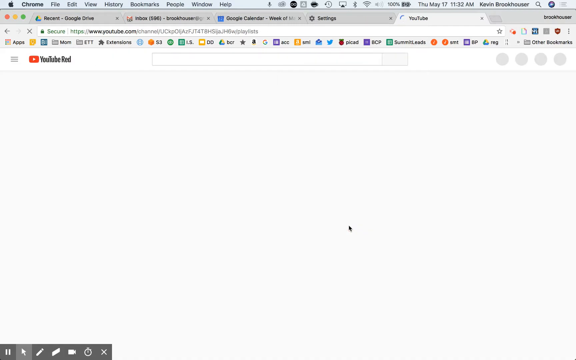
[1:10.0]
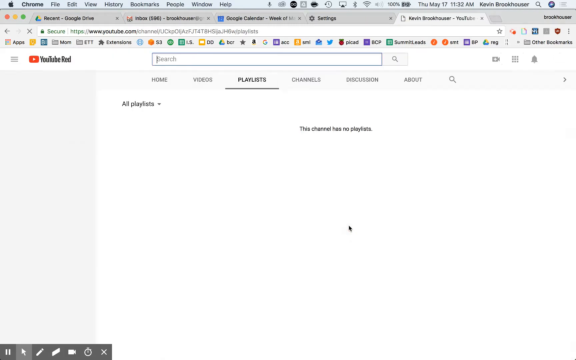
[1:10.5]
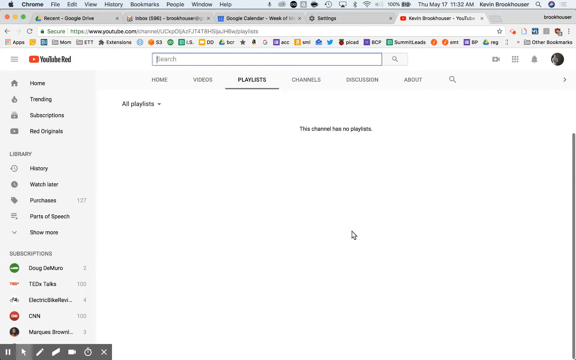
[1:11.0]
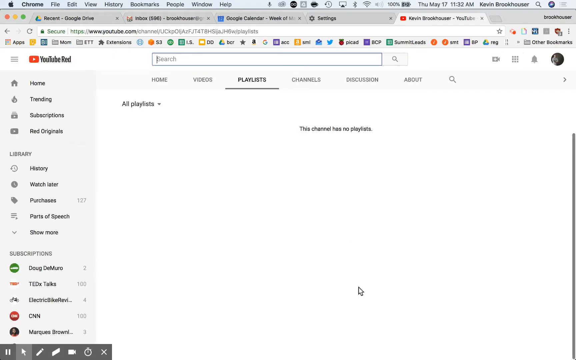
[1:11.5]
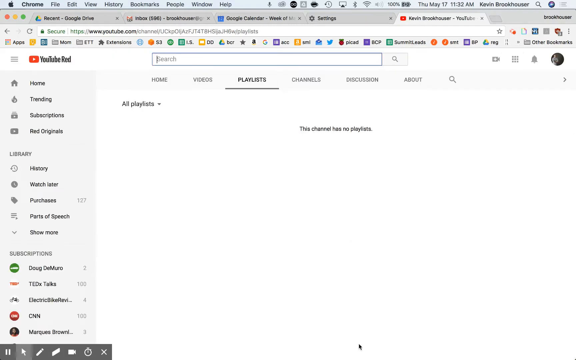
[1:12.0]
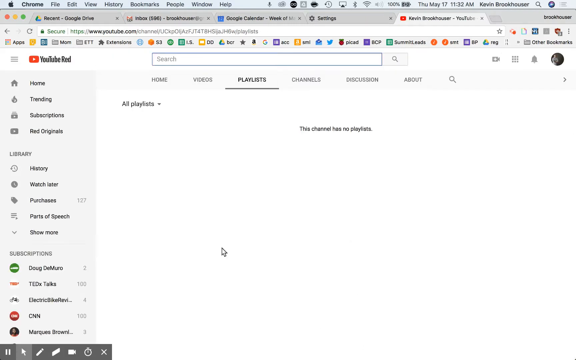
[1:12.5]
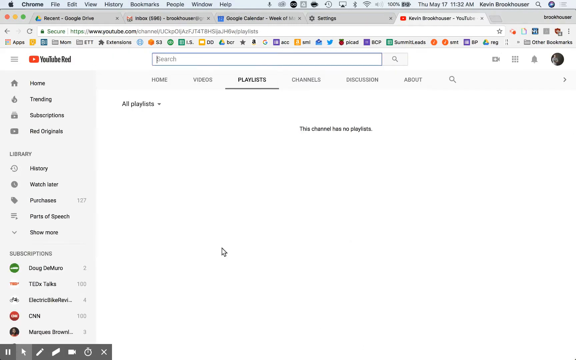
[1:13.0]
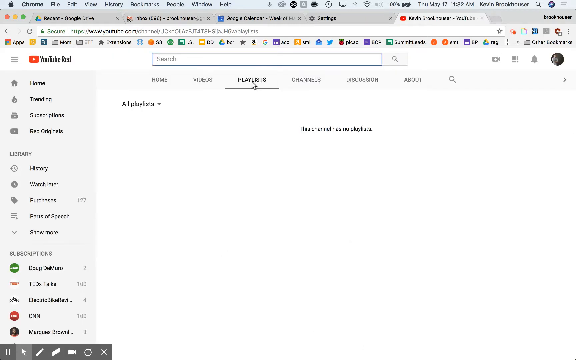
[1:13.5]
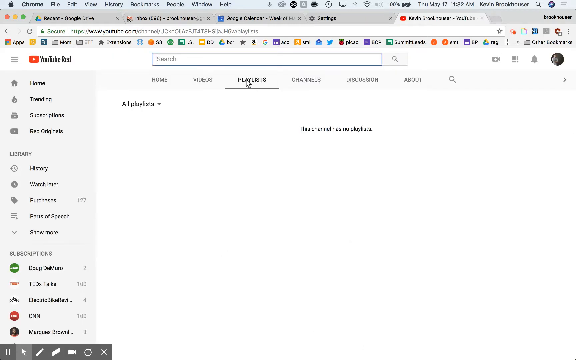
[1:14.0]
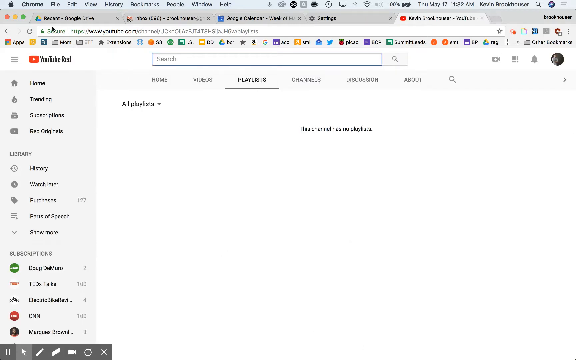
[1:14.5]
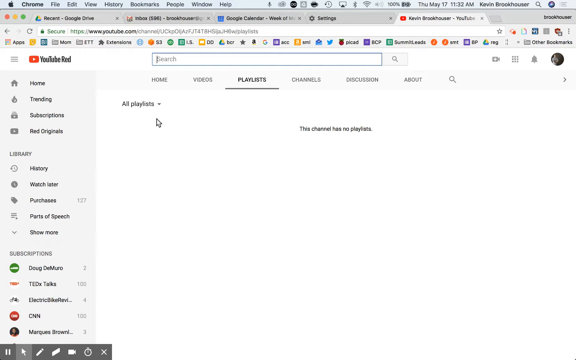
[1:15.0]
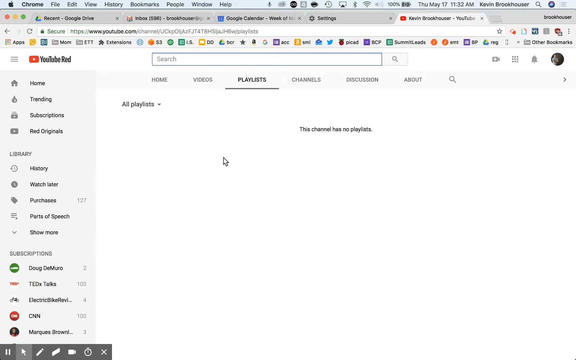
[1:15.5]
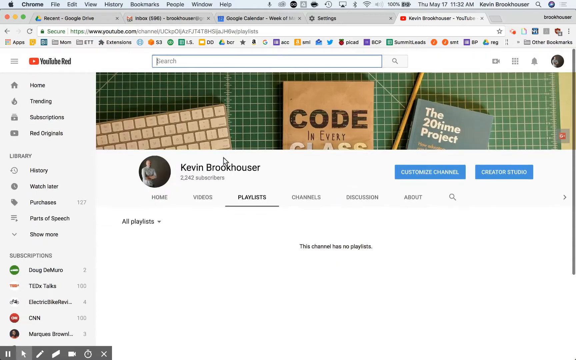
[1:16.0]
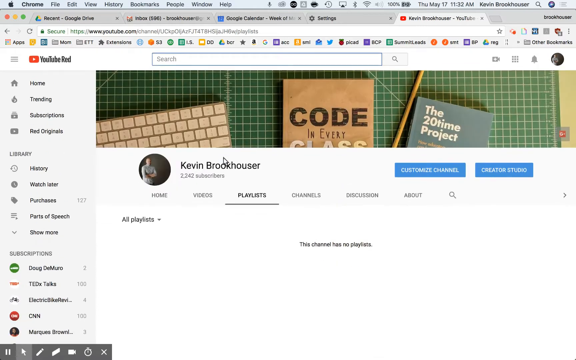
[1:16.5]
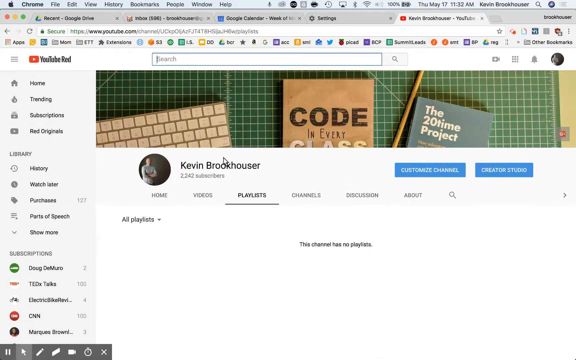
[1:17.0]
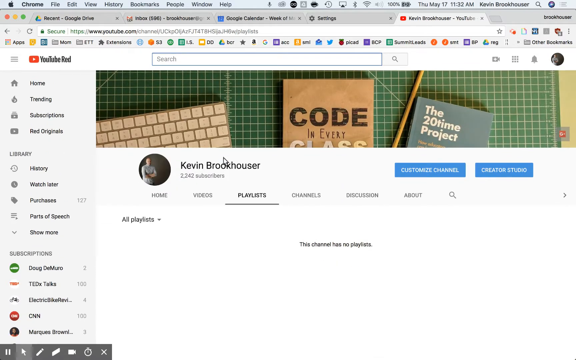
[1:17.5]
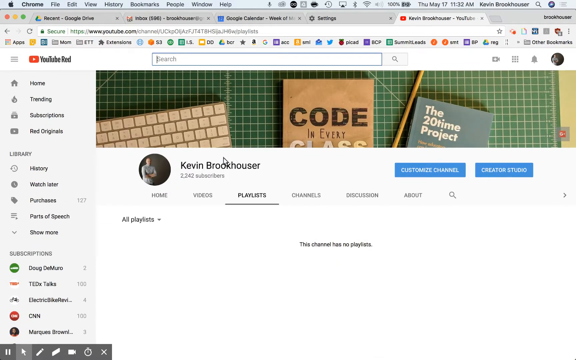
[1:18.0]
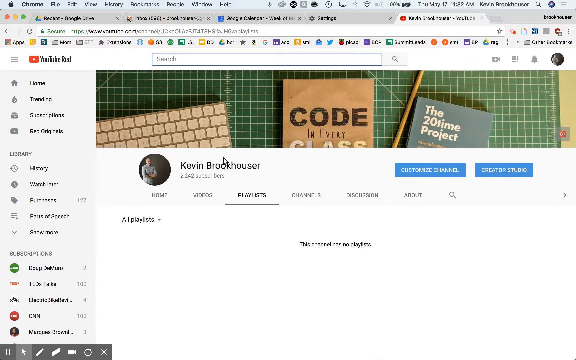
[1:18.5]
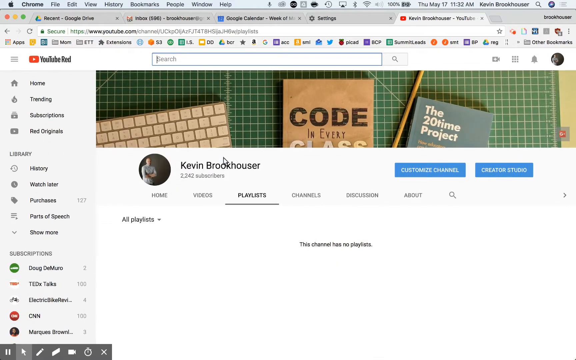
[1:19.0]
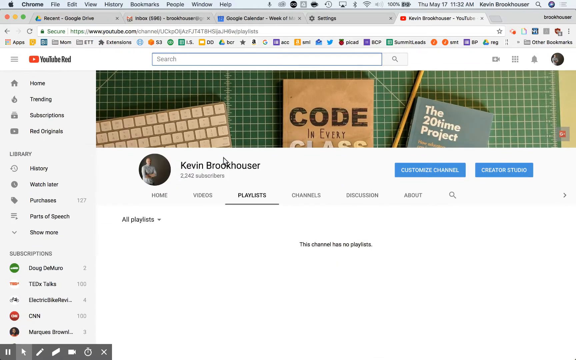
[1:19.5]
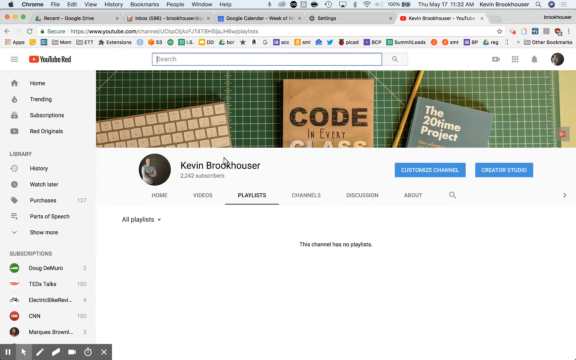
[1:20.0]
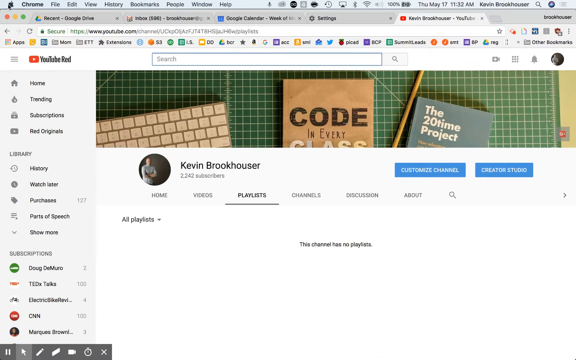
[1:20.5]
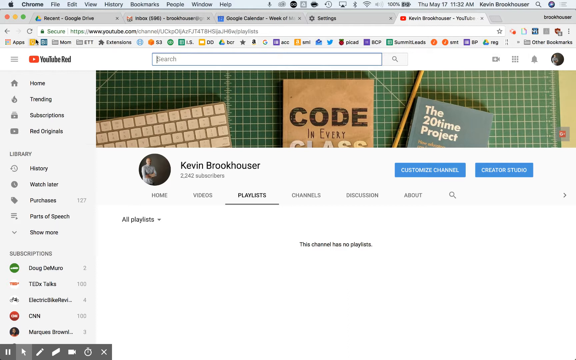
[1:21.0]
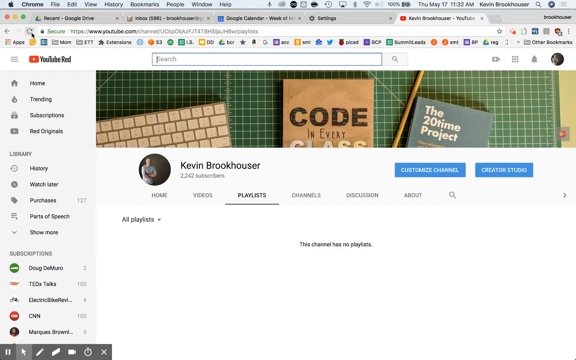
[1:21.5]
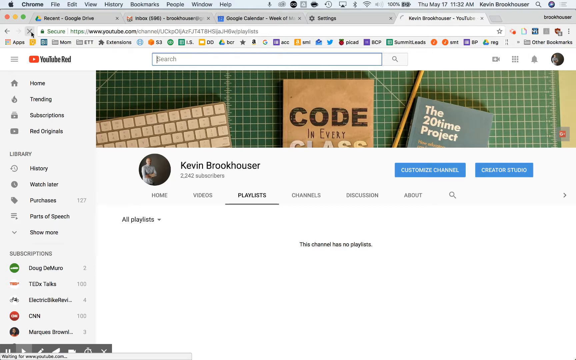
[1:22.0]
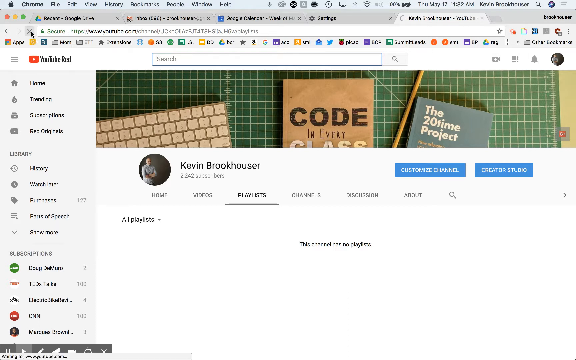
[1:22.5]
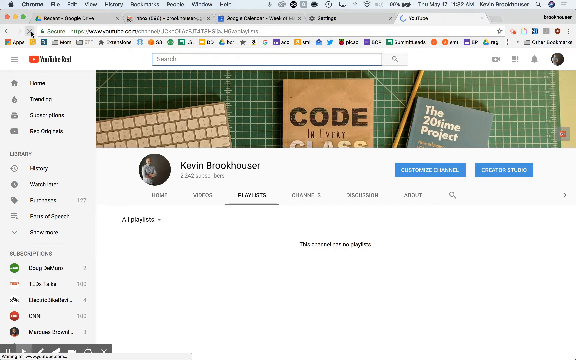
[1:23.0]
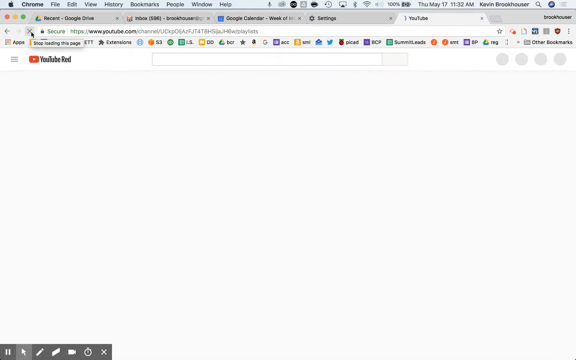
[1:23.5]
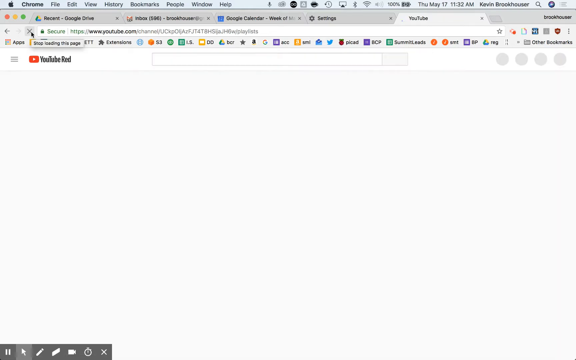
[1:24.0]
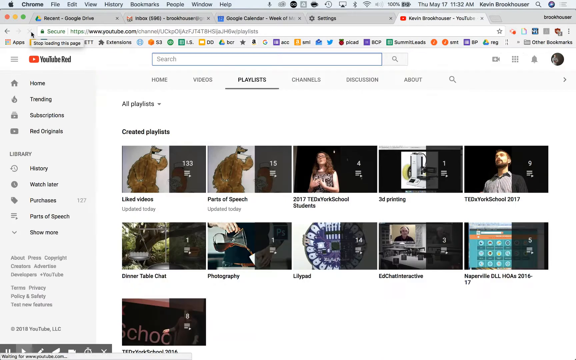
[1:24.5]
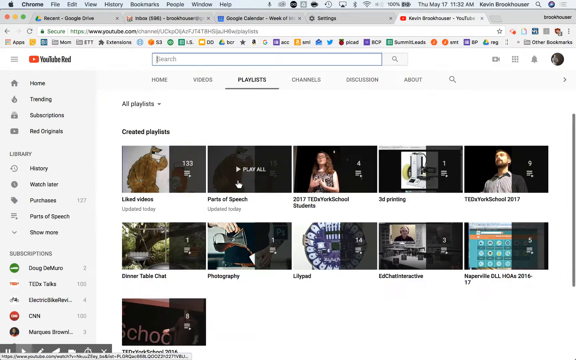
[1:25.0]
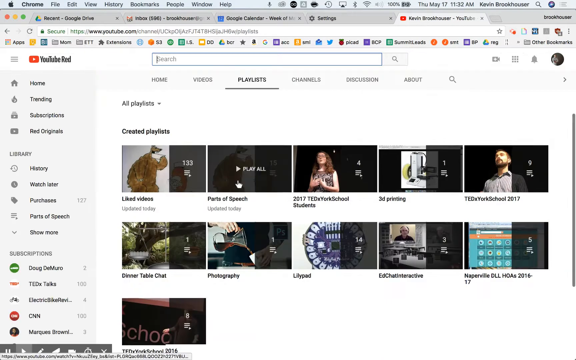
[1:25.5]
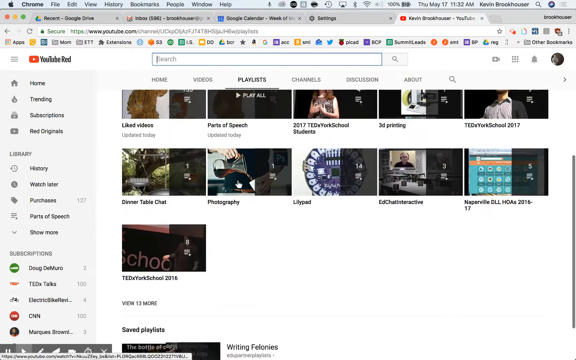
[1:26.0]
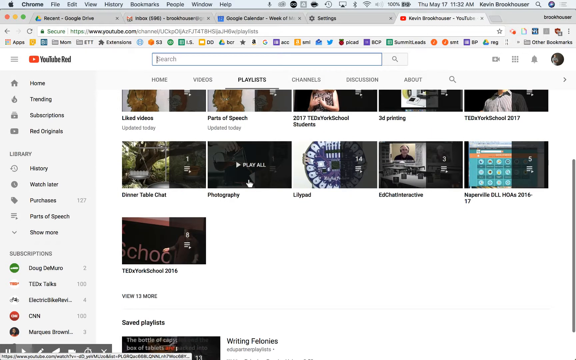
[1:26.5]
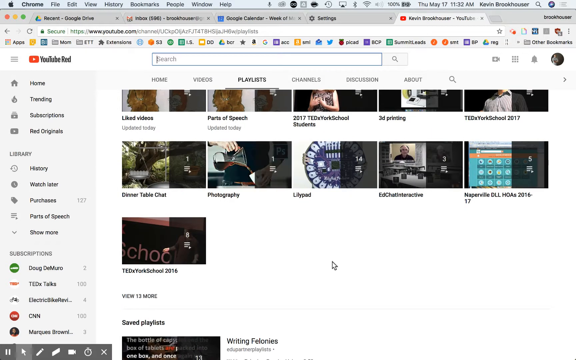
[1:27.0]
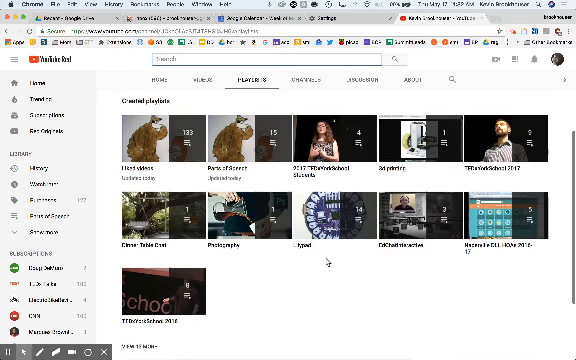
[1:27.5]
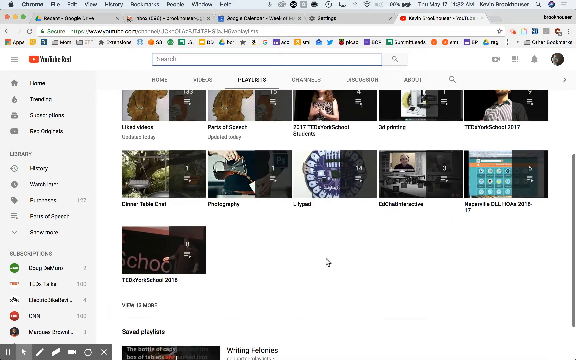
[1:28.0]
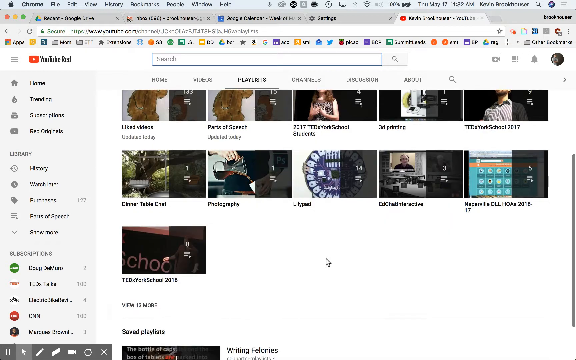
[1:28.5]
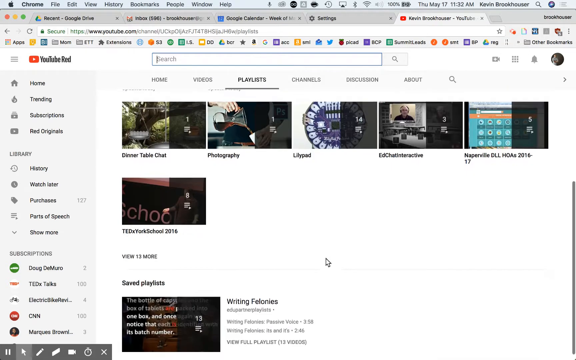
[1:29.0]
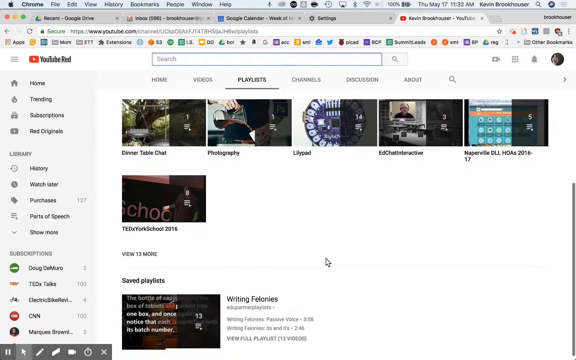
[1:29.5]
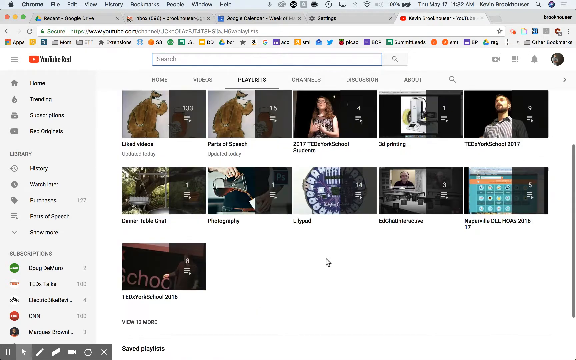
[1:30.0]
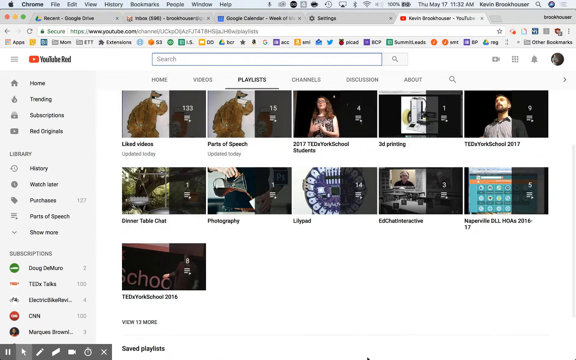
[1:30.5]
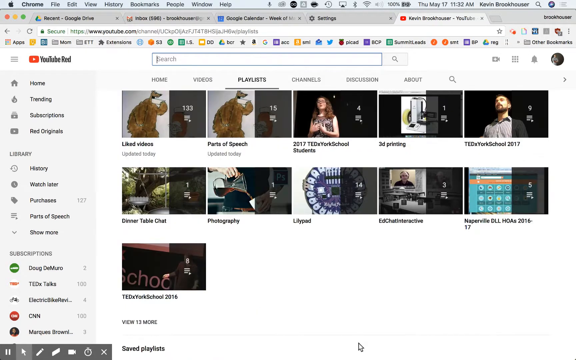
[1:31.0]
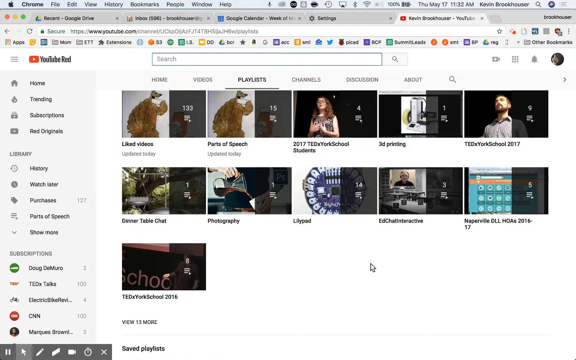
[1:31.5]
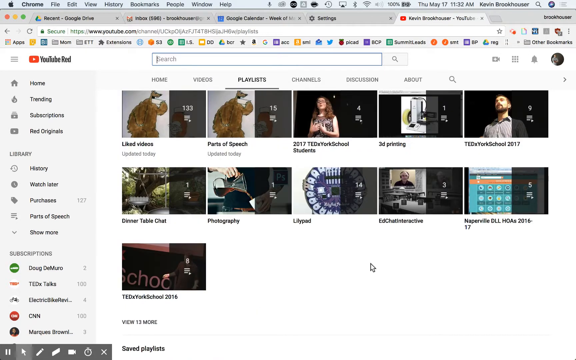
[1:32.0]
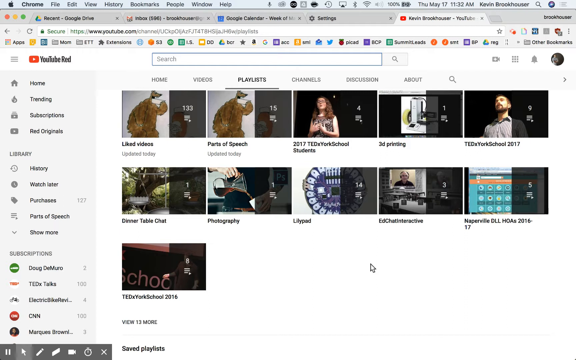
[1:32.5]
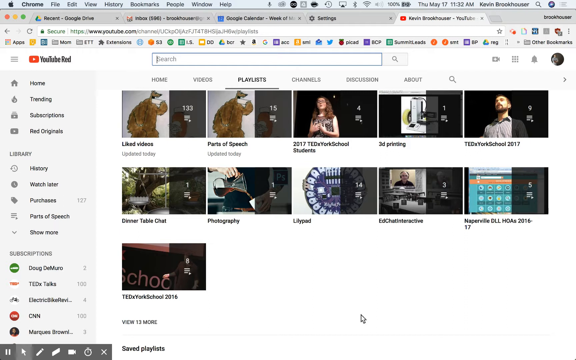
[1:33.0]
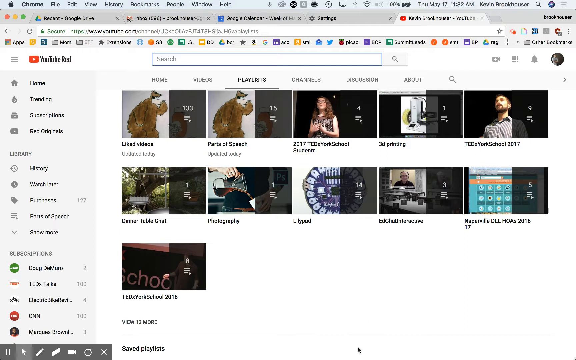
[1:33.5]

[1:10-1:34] After the playlist is deleted, he goes back to playlists, and the page says "the channel has no playlists". No playlist appears when he clicks on the other part of the playlists section either. He then reloads the browser, and his other playlists show up, including one with a woman, The Ted Talk, Liked Videos, Parts of Speech, 3D Printing, 2017, Dinner Table Chat, Photography, Lily Pad, and others. The YouTube screen shows YouTube Red in red on the left along with the menu, including Home and Trending. The Chrome browser has many bookmarks and tabs open. His subscriptions on his personal account are visible. There is a white search bar with the gray word "search" in it.